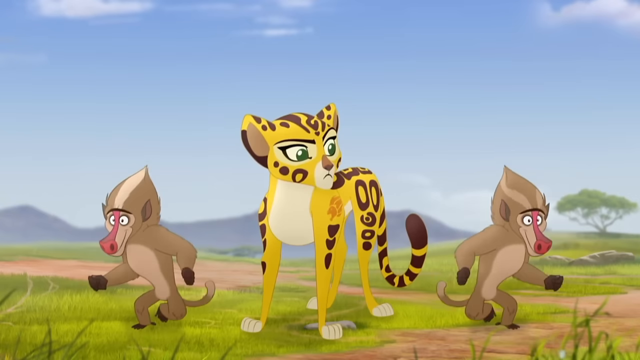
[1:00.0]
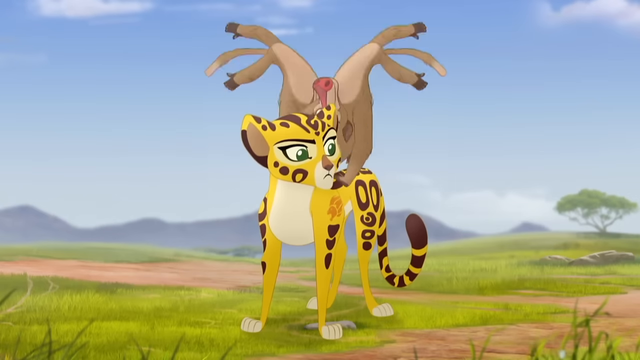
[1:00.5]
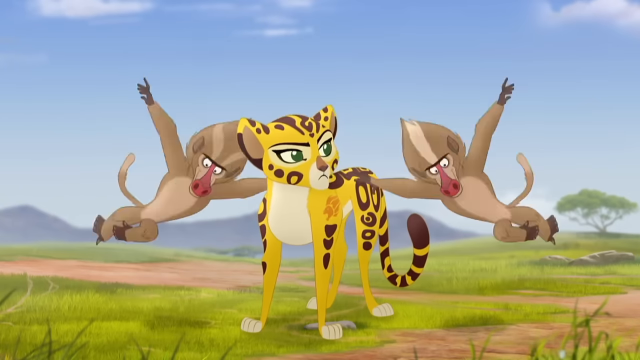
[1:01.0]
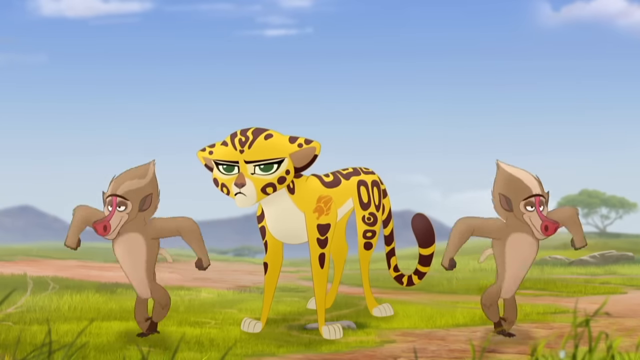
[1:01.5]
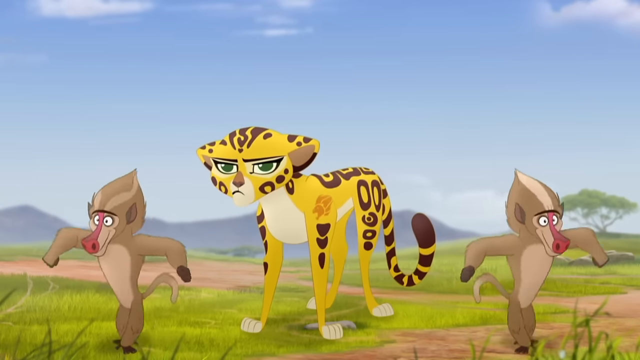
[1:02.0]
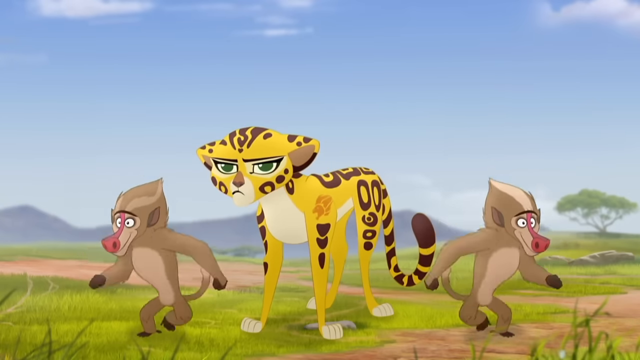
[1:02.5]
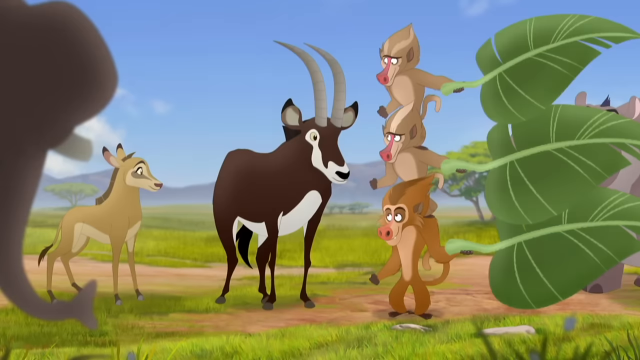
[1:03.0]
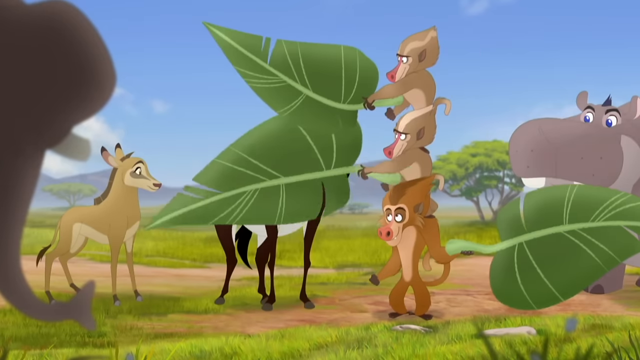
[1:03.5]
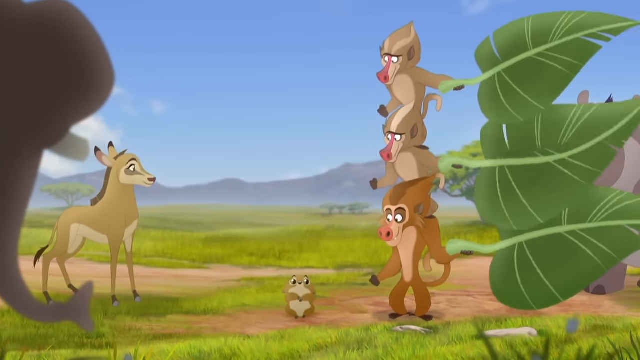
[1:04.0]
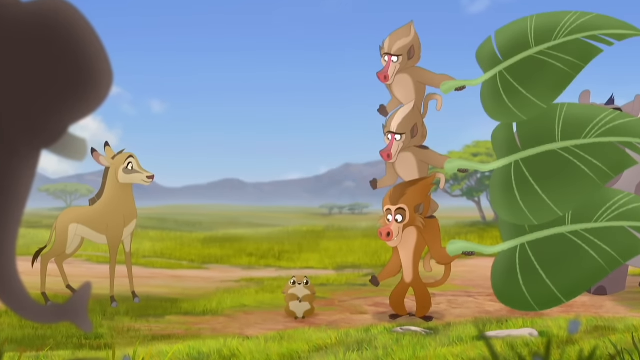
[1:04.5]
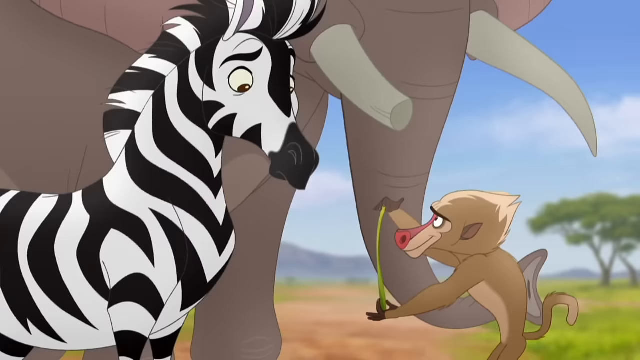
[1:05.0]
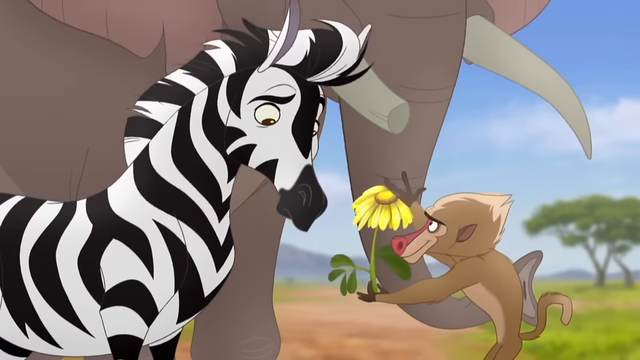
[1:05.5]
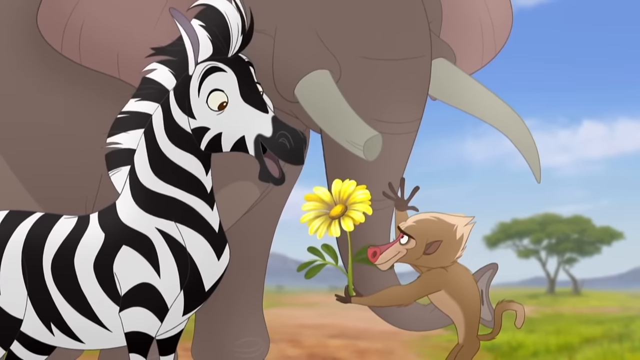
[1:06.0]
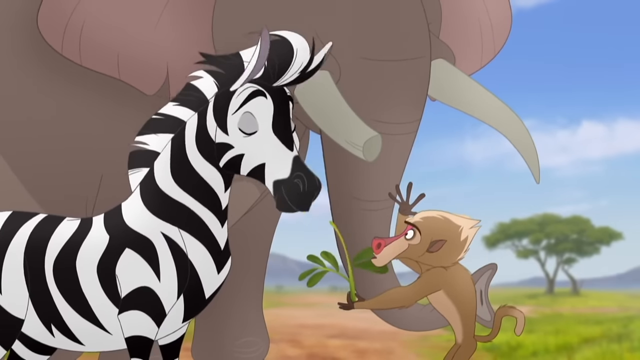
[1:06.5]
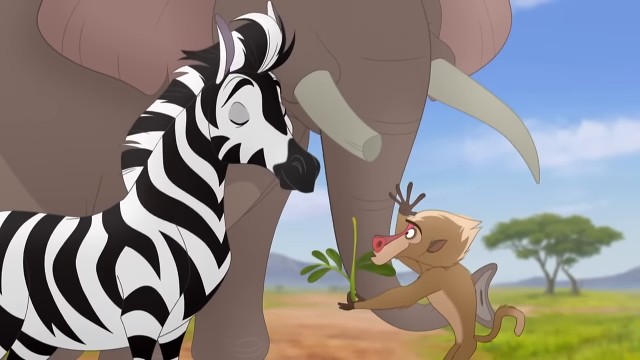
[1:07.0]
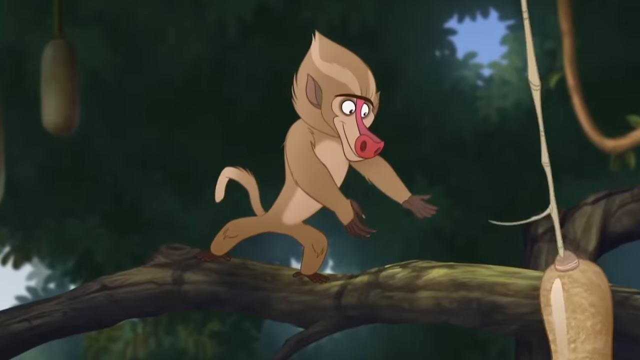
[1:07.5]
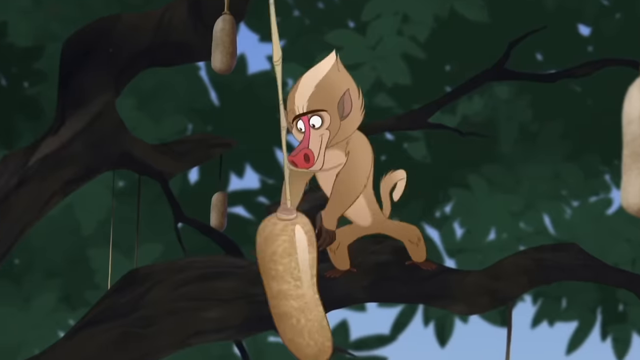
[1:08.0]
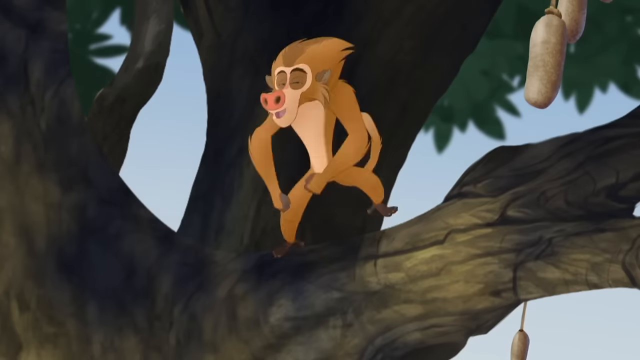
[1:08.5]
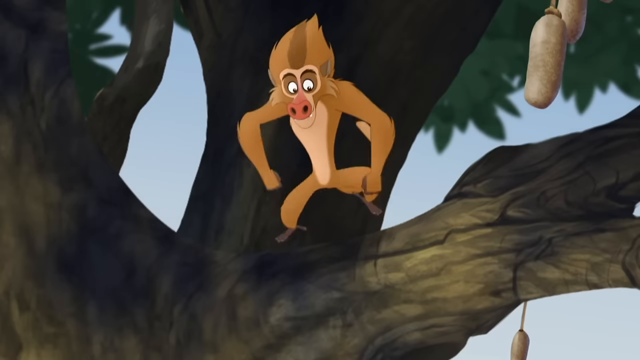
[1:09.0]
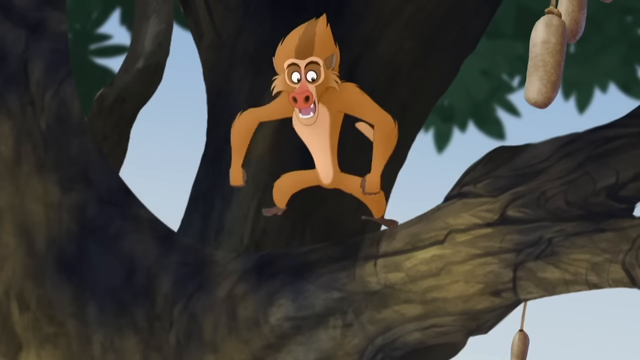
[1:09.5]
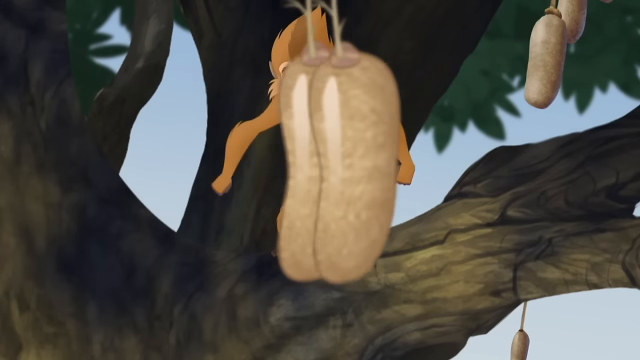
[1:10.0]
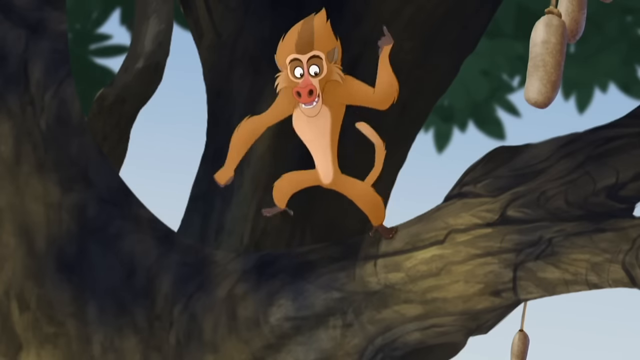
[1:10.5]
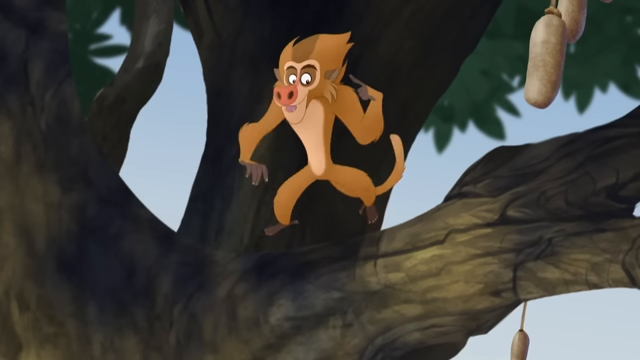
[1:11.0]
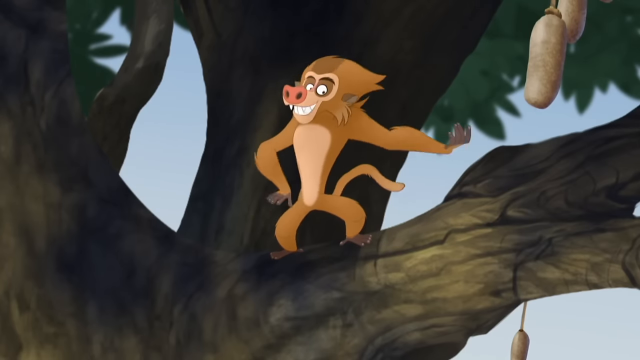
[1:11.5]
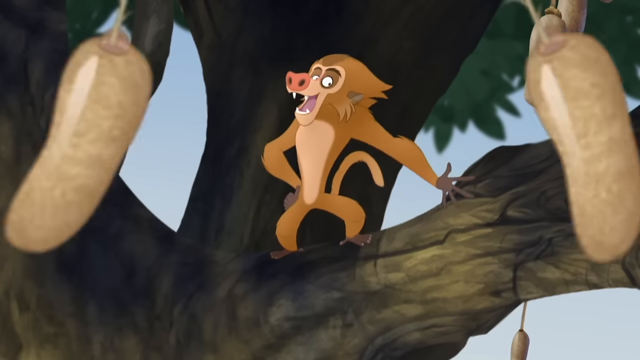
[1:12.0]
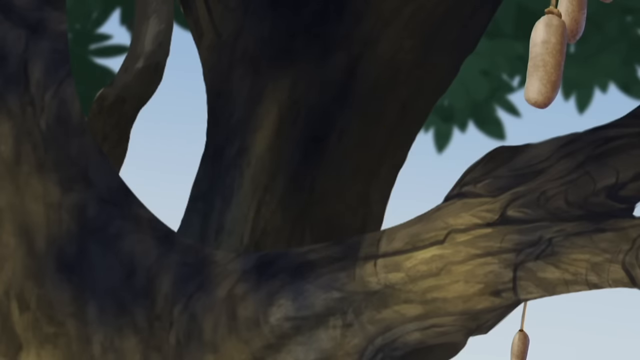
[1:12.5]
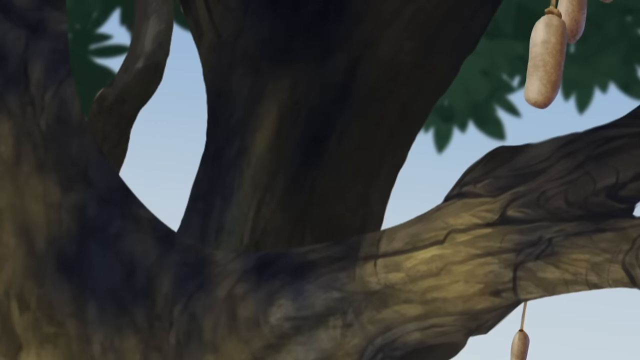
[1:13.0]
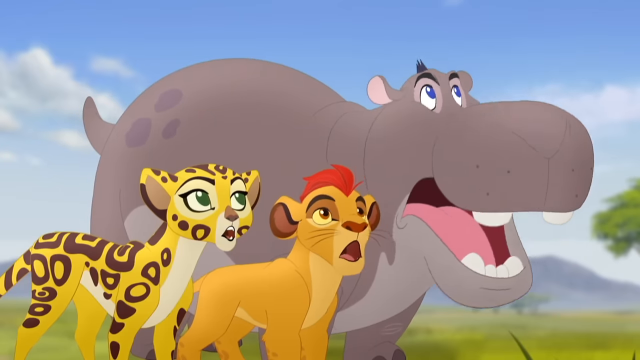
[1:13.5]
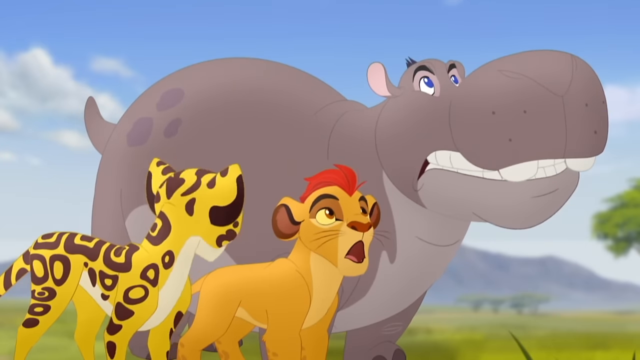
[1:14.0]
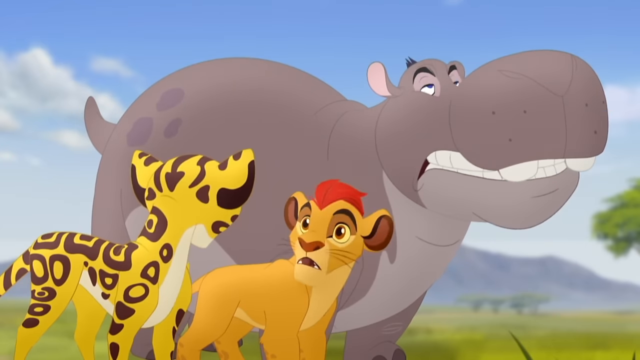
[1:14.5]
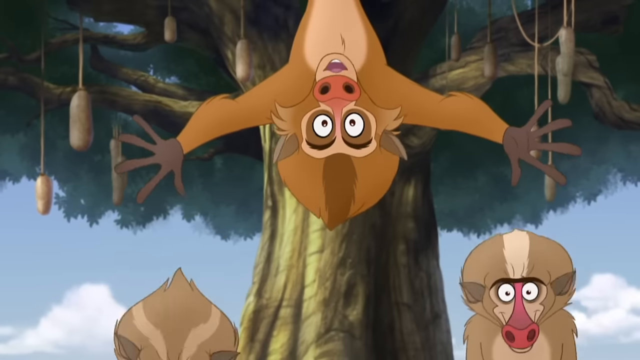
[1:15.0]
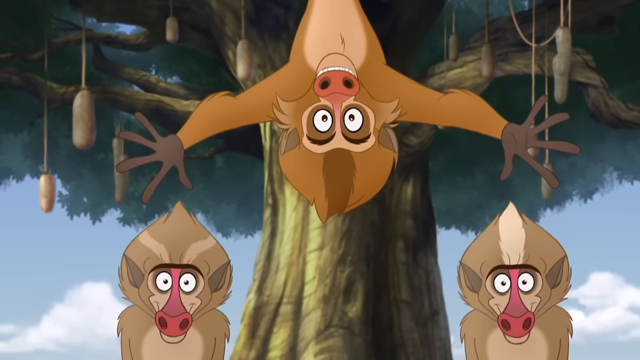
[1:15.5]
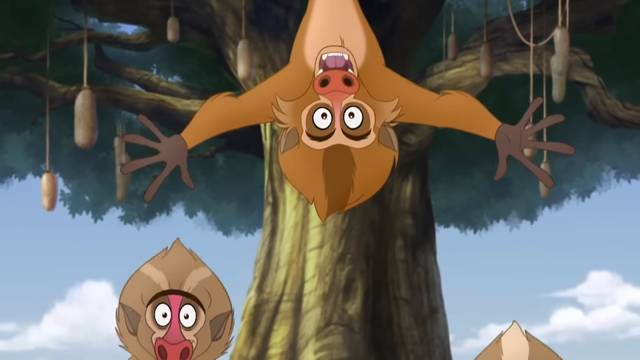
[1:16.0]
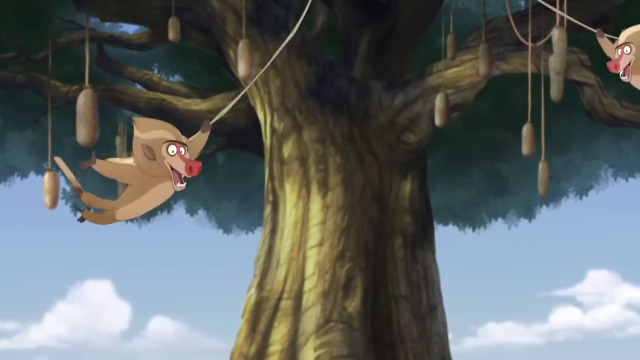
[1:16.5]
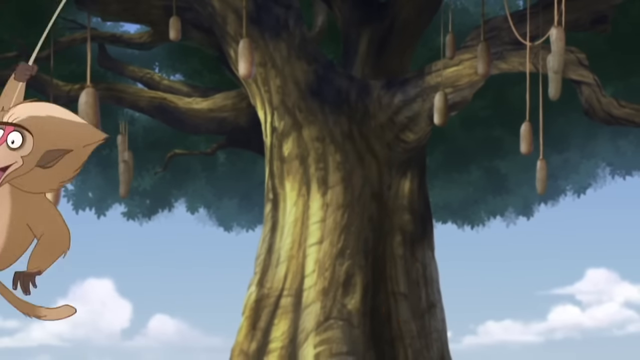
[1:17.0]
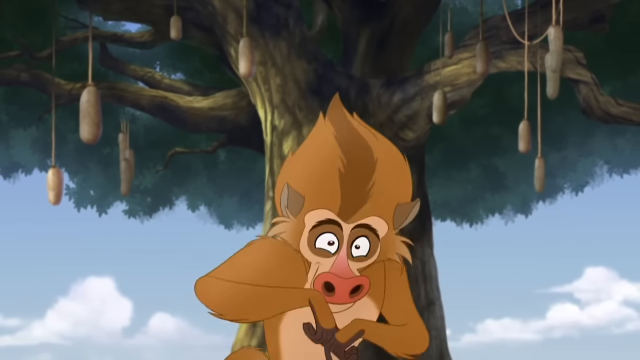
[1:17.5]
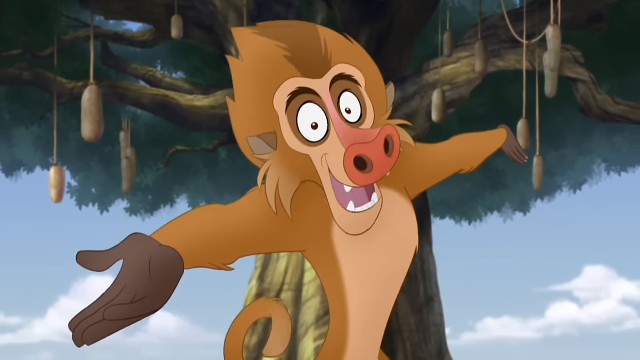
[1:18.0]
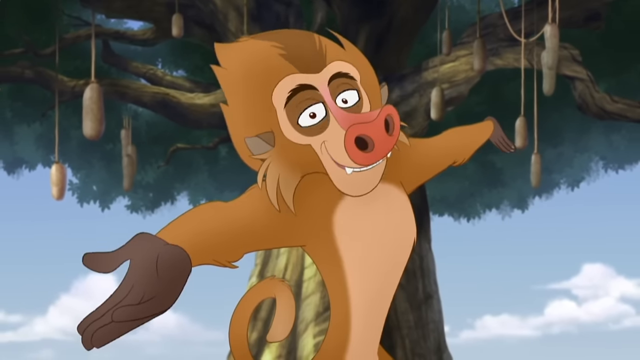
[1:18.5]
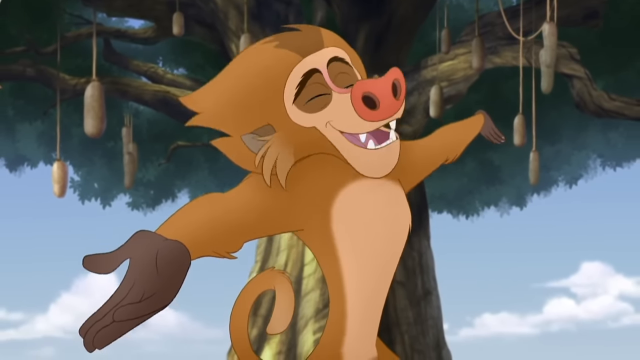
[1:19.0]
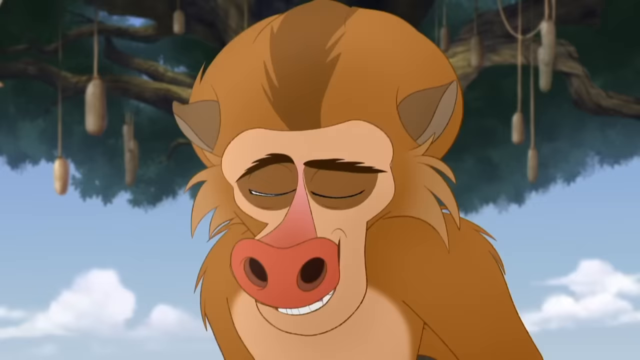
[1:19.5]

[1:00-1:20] The very annoyed cheetah has the two baboons dancing near her. They continue the dance and then do a backflip over her, which angers her even more. In another scene with the group of animals, the three baboons stand on top of each other, cover what appears to be the antelope with palm trees, and pull them away to reveal a tiny squirrel in its place; some of the animals look amused. Next come the elephant, the zebra and a baboon; the baboon pulls a flower out of his hand, the zebra eats the flower, and the baboon looks shocked. Back at the tall tree, the baboons are throwing things that look like sausages hanging from the tree, probably a fruit, and swinging around. The darker brown baboon dances and sings, suddenly disappears, and then is hanging from the tree. The baboons swing from the tree, then he comes back dancing and singing, with a close-up of his face, followed by a close-up of the hippopotamus seemingly dancing to the music.